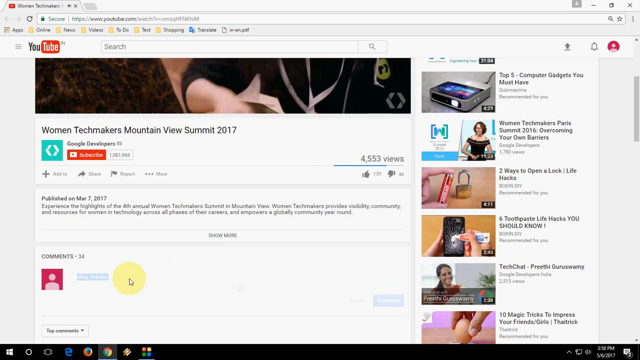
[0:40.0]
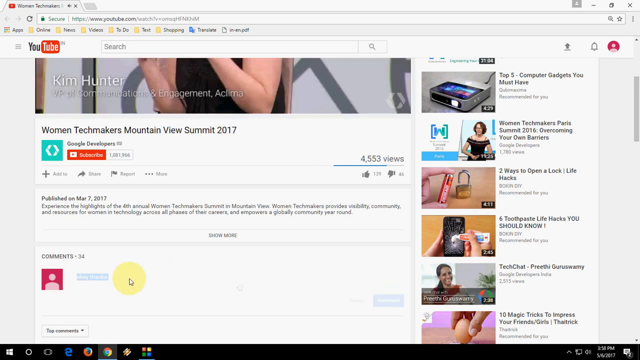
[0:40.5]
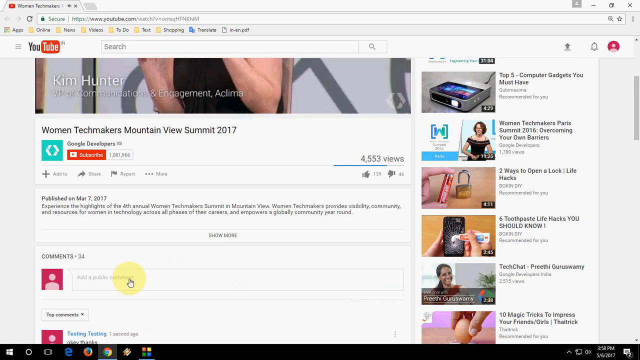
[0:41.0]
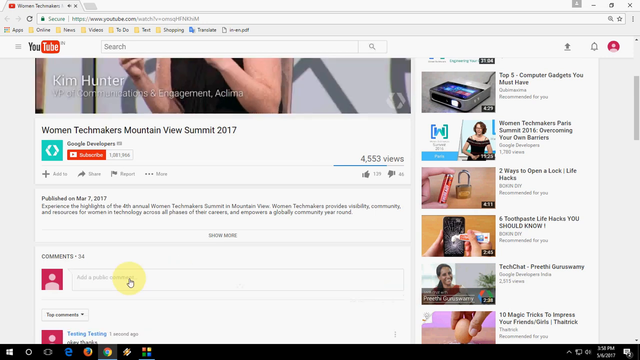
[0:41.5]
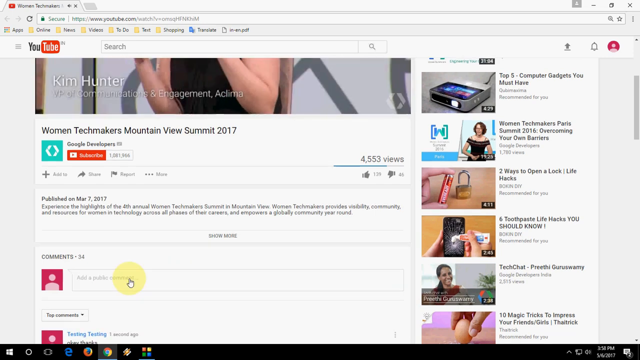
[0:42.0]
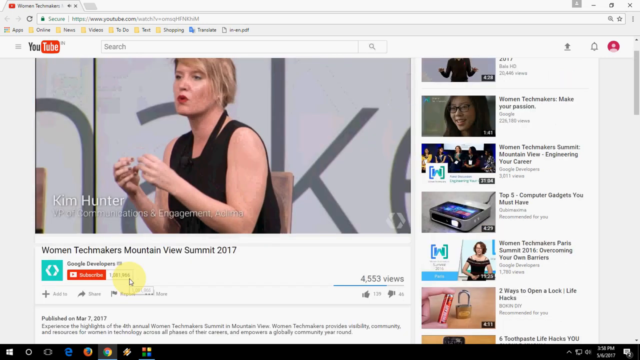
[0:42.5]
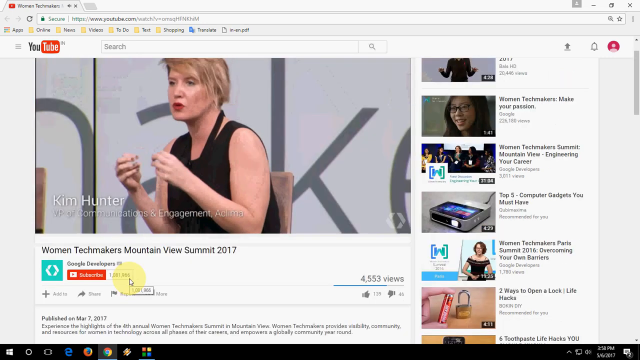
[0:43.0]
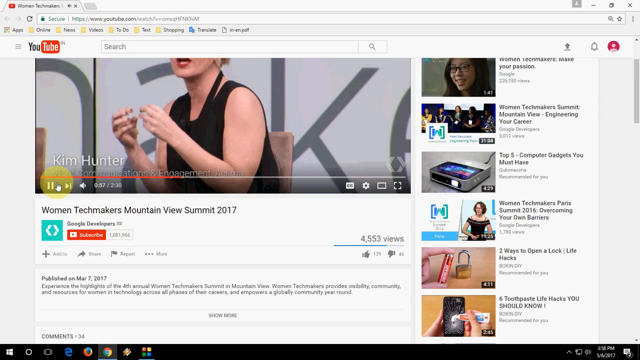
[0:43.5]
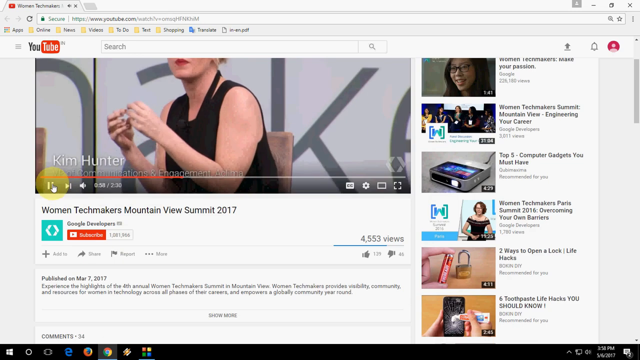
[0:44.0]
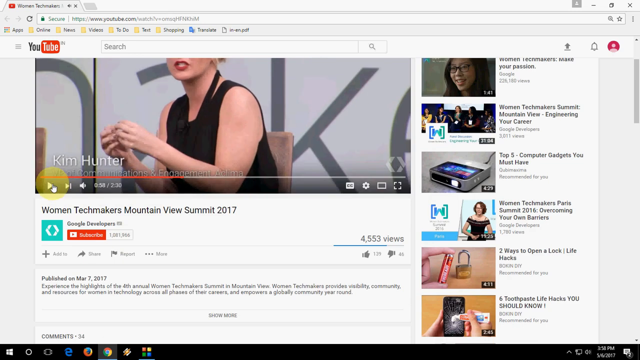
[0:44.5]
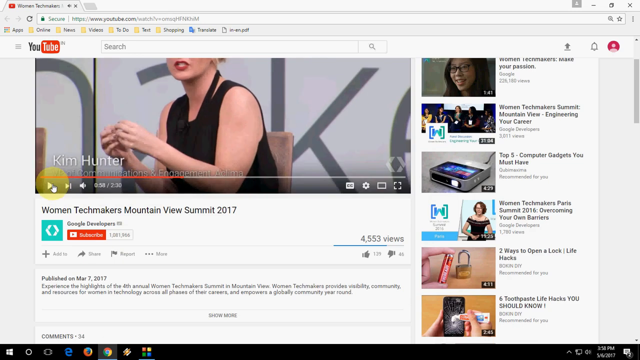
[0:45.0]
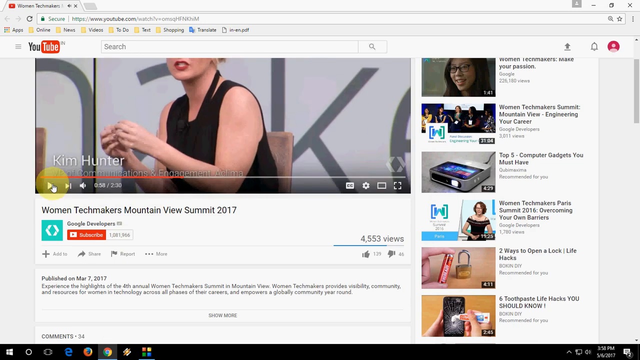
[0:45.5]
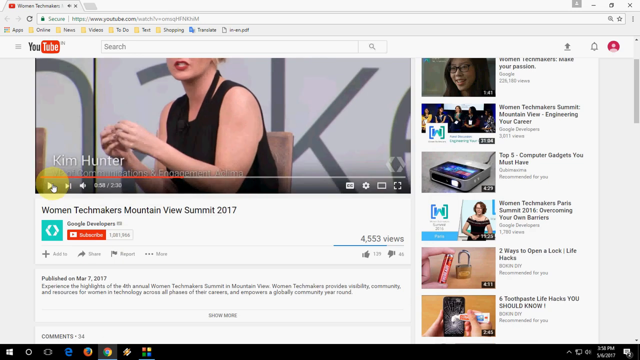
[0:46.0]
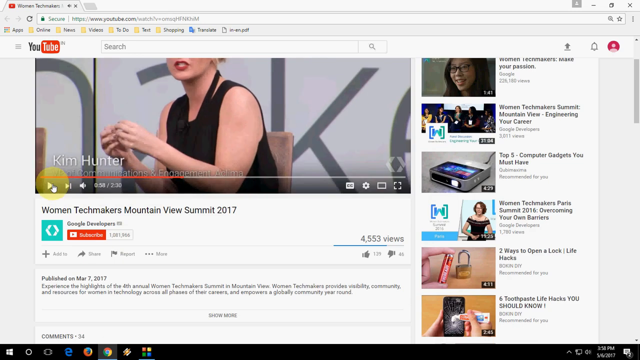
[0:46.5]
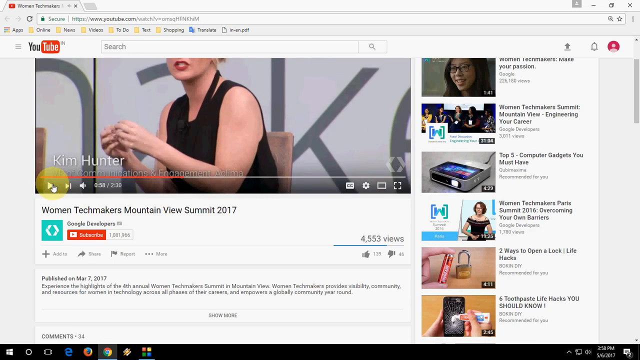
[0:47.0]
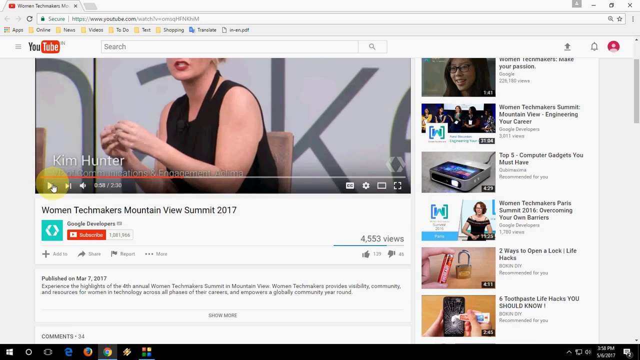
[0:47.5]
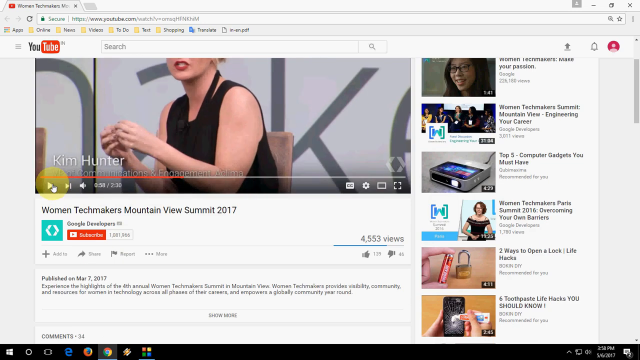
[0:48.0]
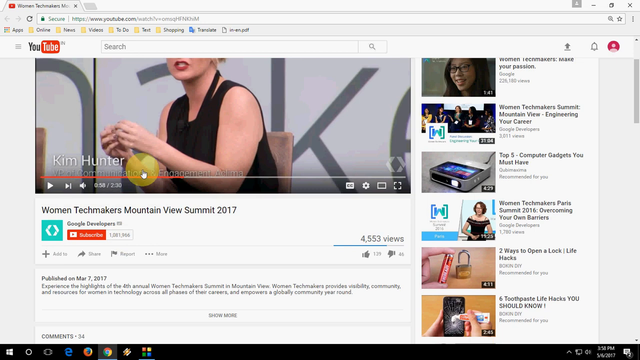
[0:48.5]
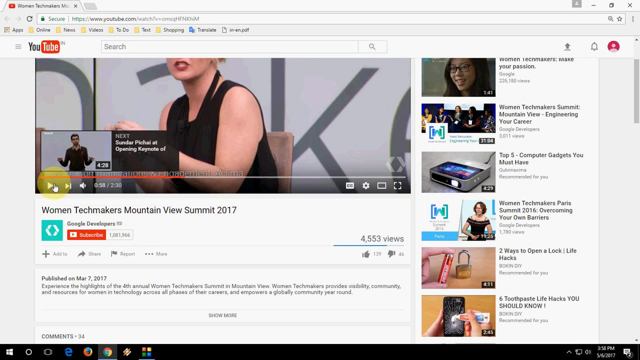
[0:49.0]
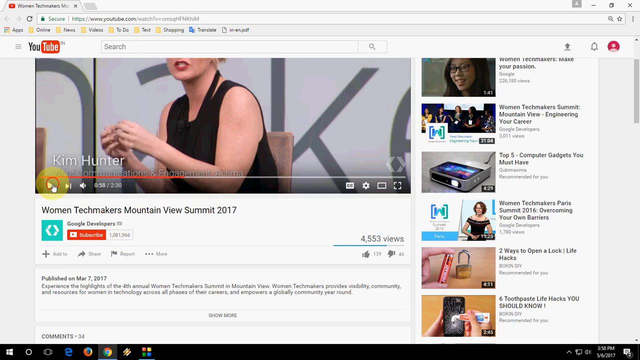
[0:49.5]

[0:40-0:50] The capture of the person viewing the Women Techmakers Mountain View Summit of 2017 video continues, with the cursor highlighted by a yellow circle so the person's actions can be followed. They scroll up and look at the video, which looks to be maybe halfway or a third of the way through. They pause it and scroll back down to the comment section, looking like they are about to add another comment underneath the video, which has 4,500 views. Suggested videos are visible on the right-hand side. The browser is fairly old-looking and in bright daytime mode, with everything white.